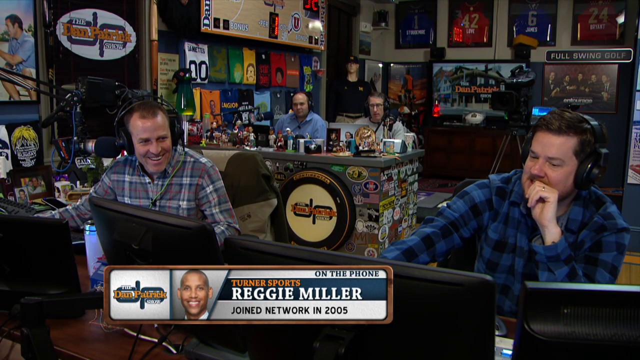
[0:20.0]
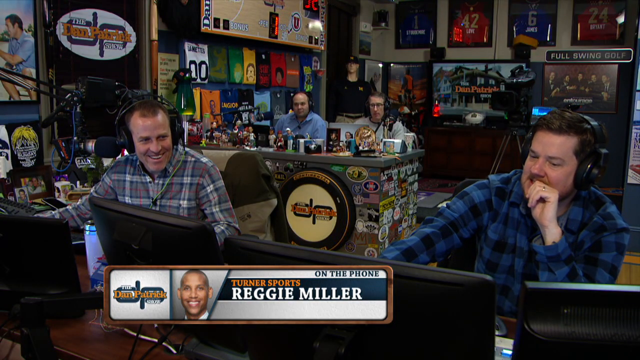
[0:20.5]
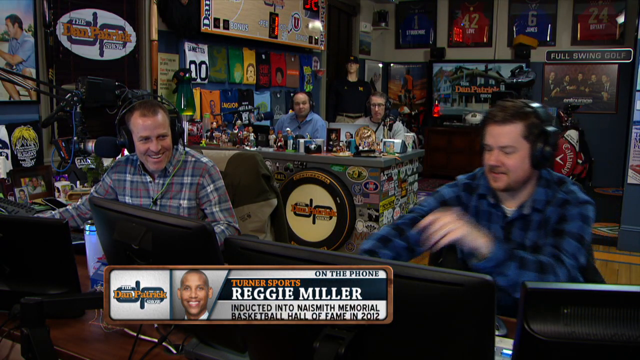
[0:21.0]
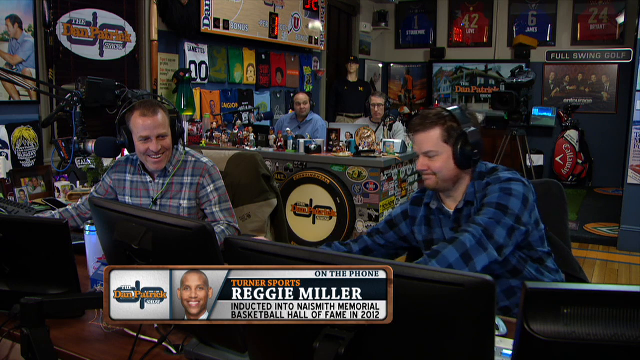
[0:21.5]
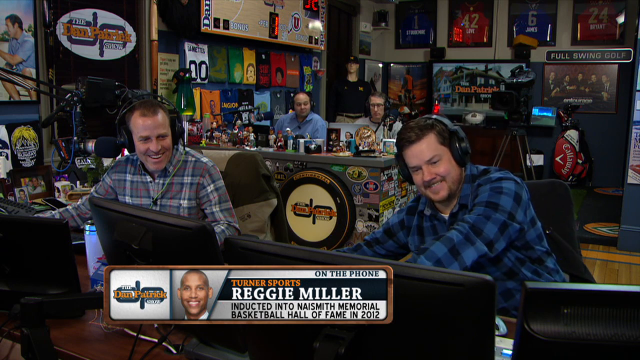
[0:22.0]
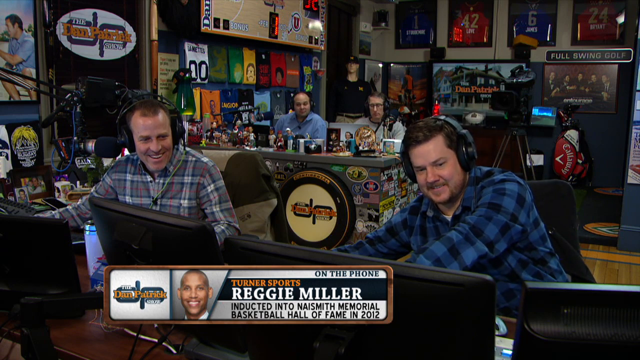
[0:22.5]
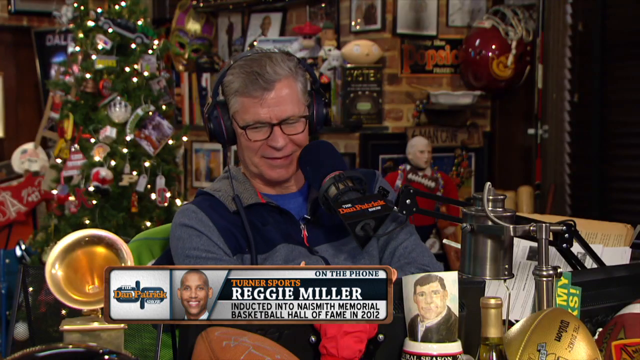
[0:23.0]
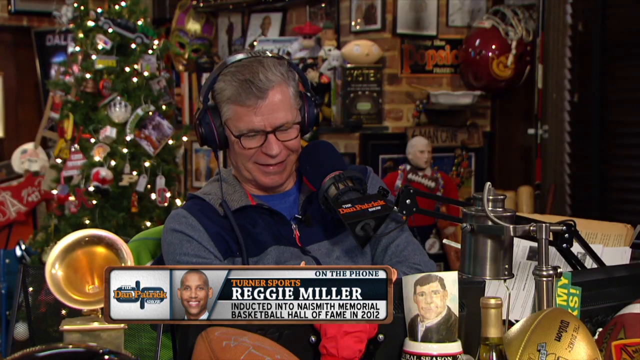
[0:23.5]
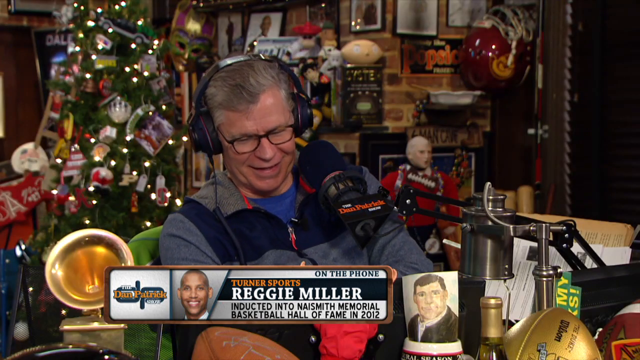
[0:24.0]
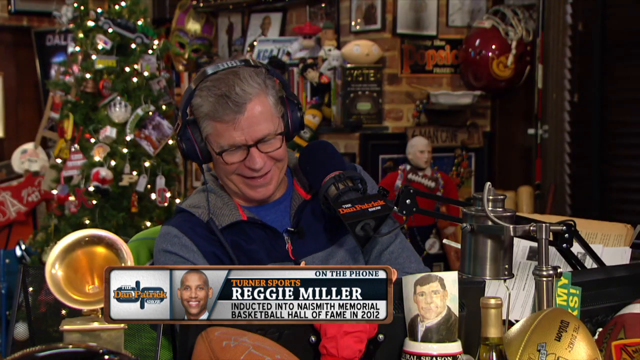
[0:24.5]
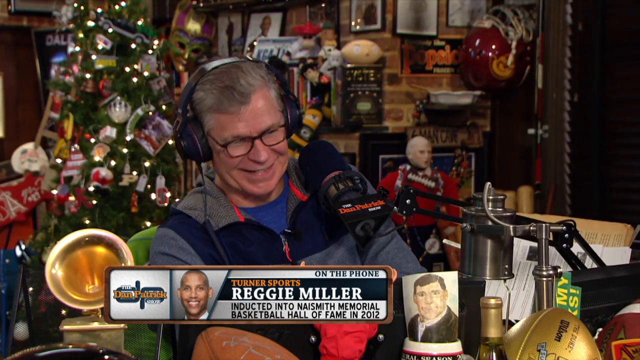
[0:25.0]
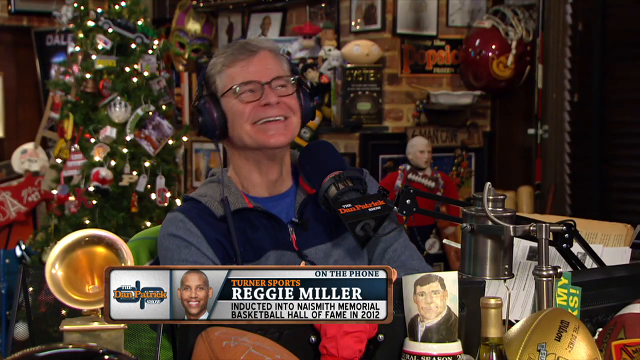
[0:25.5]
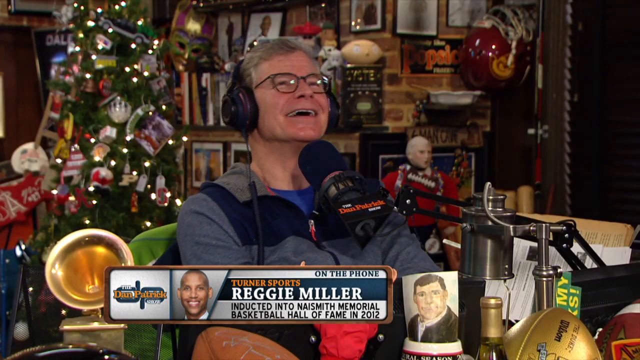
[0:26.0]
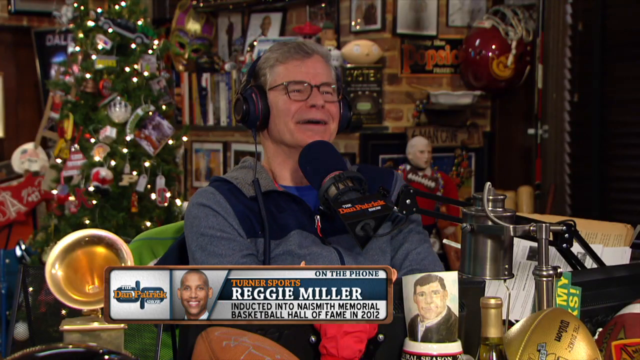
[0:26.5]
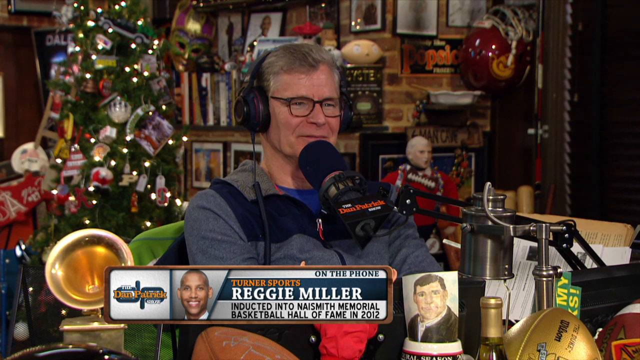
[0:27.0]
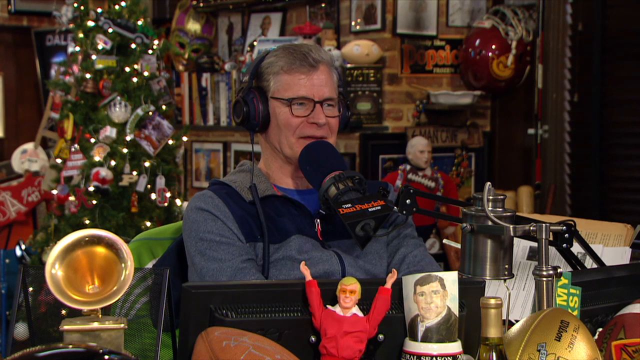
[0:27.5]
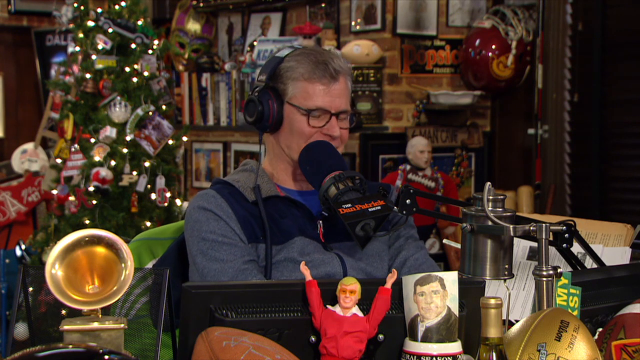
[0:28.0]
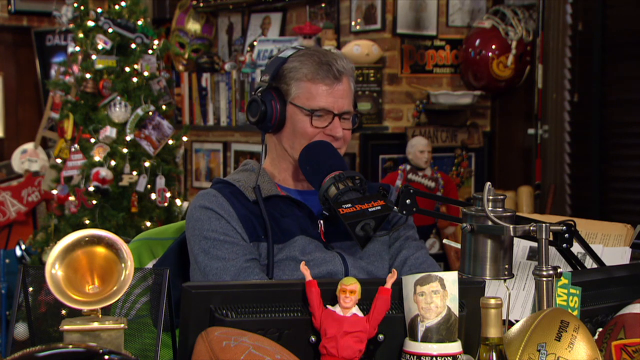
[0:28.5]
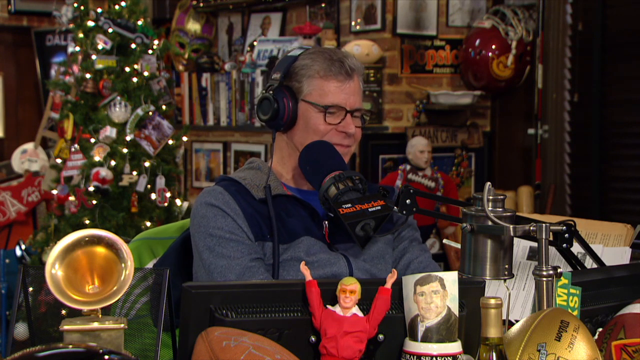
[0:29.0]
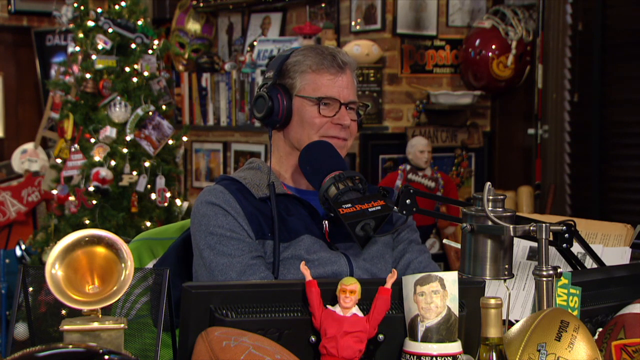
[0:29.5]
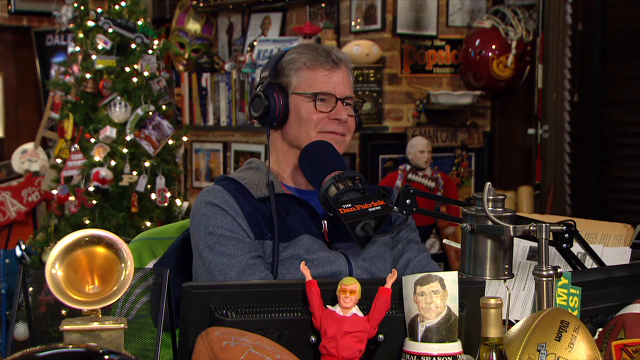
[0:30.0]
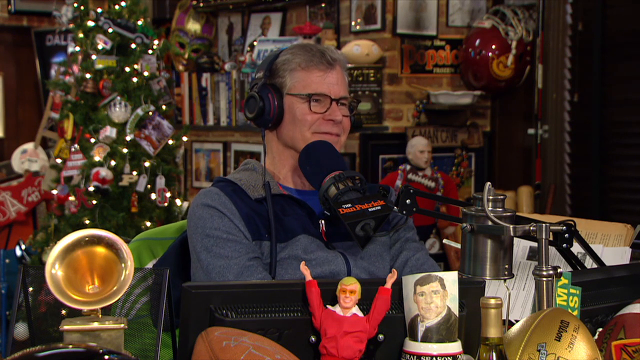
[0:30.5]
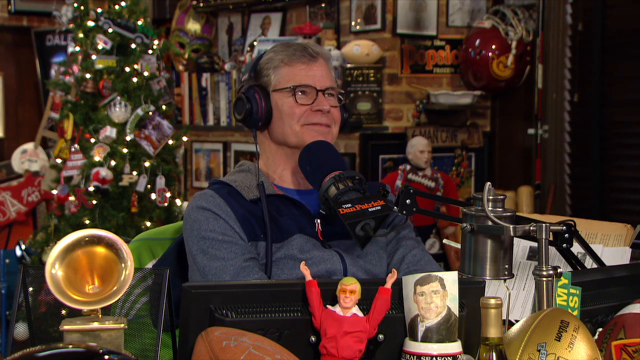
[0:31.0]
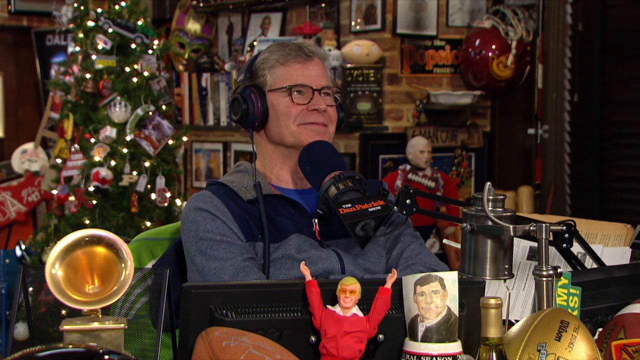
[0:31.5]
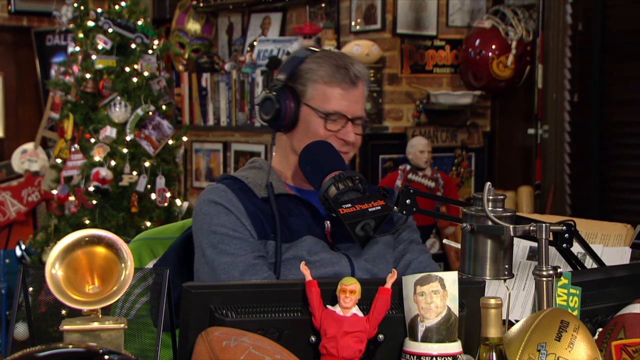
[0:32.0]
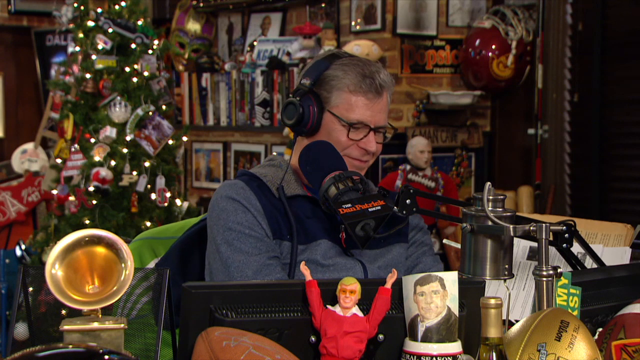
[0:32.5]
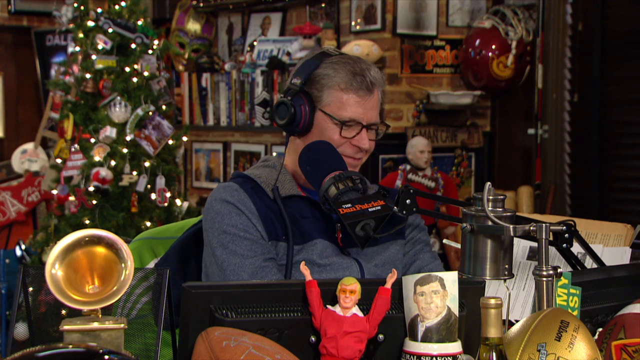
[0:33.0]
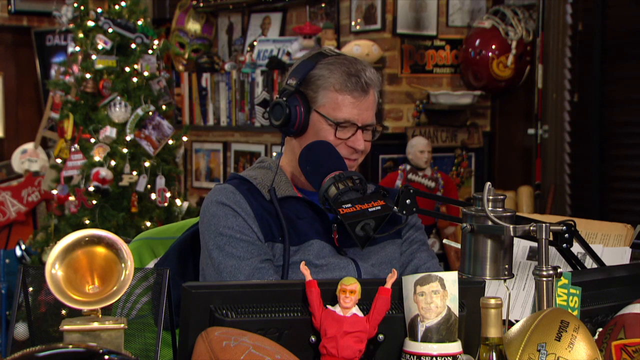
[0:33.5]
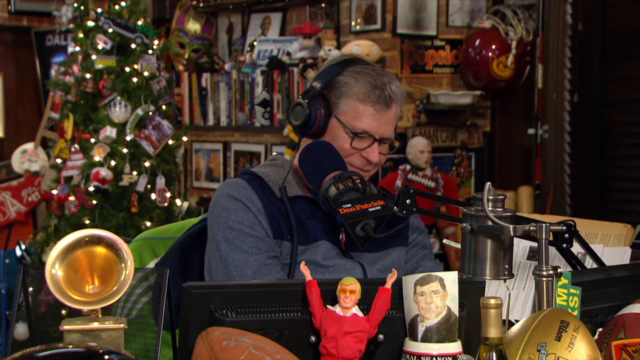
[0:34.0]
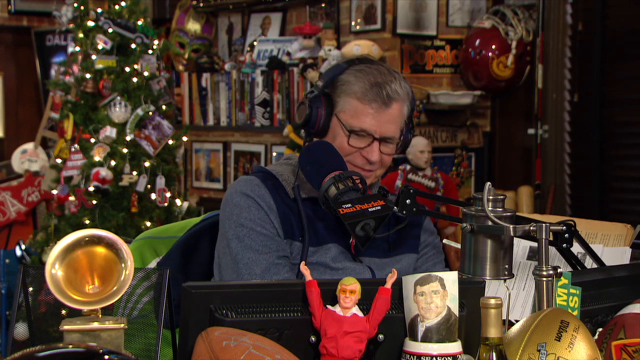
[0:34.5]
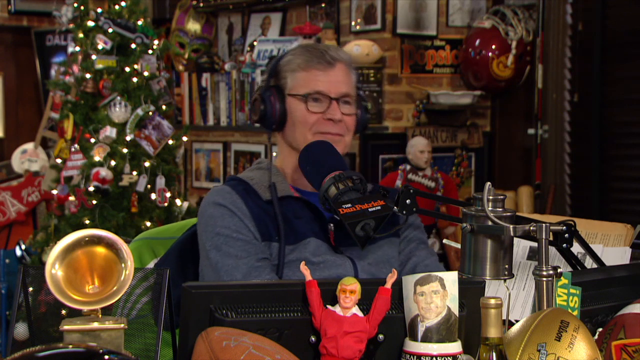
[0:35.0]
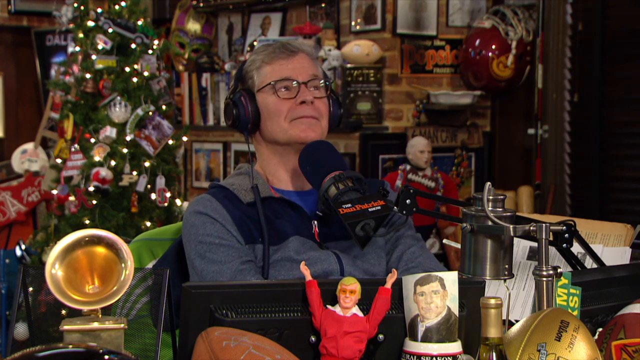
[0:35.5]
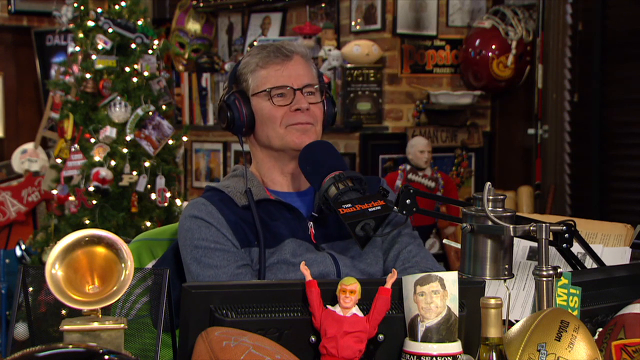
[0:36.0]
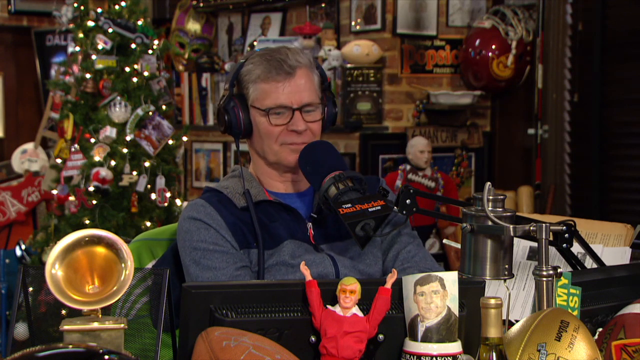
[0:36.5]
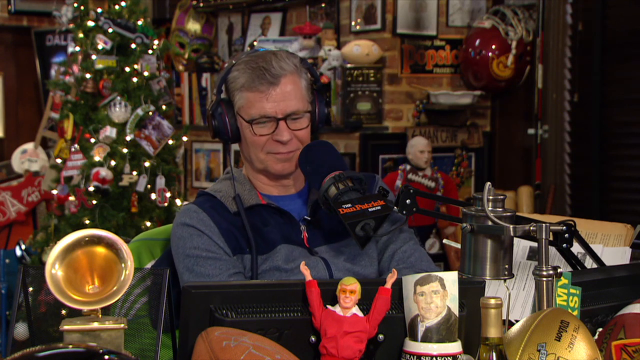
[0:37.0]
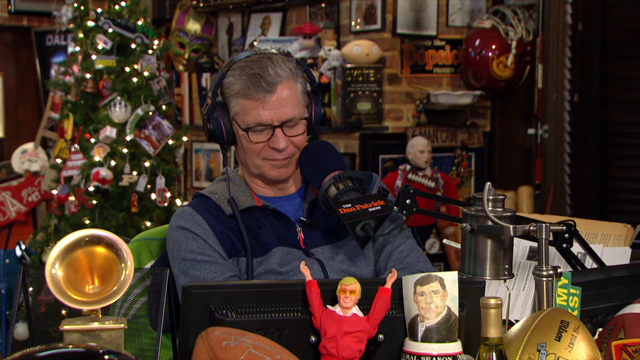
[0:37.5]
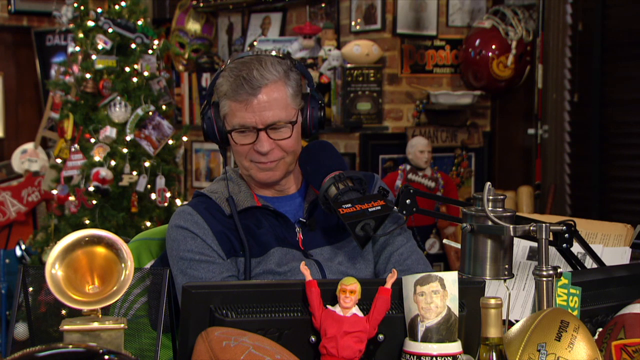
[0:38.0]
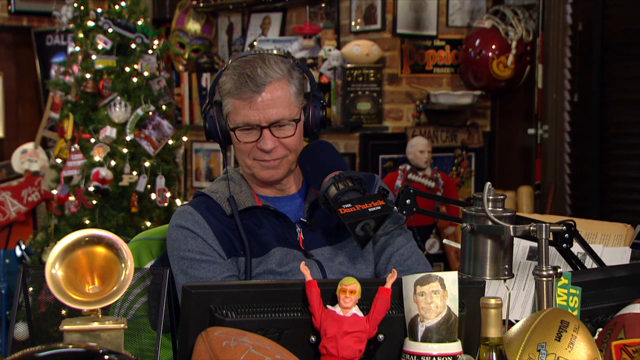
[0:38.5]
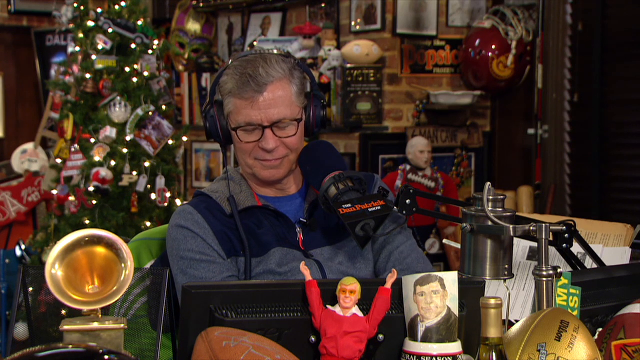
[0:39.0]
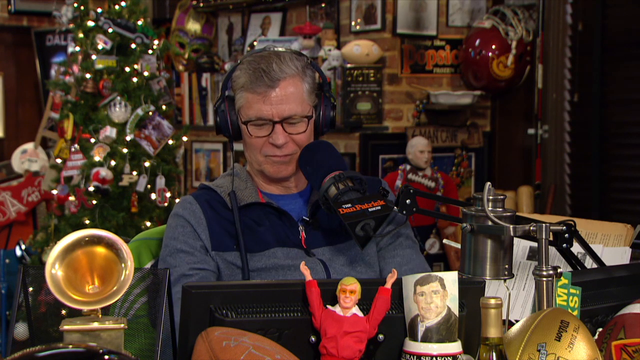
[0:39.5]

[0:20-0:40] Back in the studio, the view is from behind some of the men apparently working behind the scenes, who wear over-the-ear headphones and sit at flat screen monitors. The guy in the black checkered shirt bites his fingernail while manipulating something, and the guys in the back listen with their over-the-ear headphones. A bunch of magnets are on the front of the desk, along with a tire-looking object with the Dan Patrick emblem in the middle. In the far left corner there appears to be an Adam Sandler movie poster, and a digital scoreboard is above the desk in the back. The guy in the checkered shirt leans over and messes with something. The shot returns to Dan Patrick, who leans slightly to the right laughing, looks up and giggles, swallows a few times and nods his head, almost as if collecting his thoughts. His arms stay folded the whole time; he raises his eyebrows a little and looks down. Someone is perhaps messing with something at the computer.